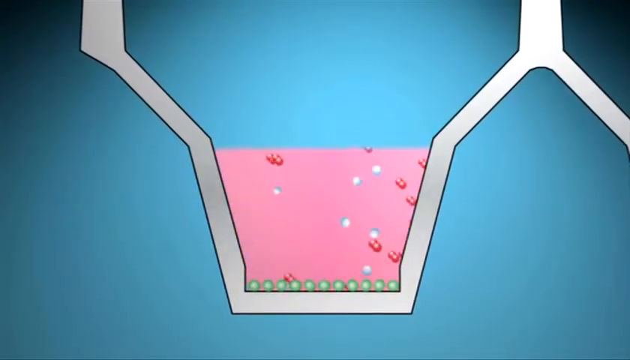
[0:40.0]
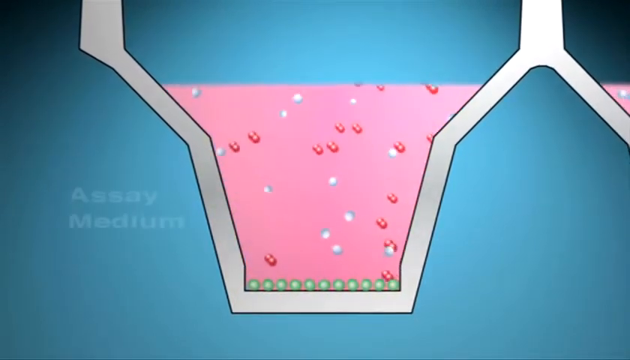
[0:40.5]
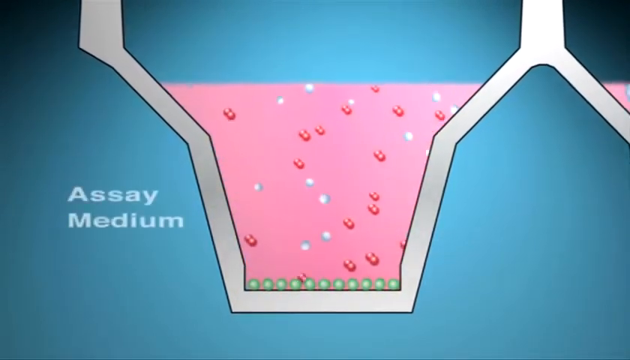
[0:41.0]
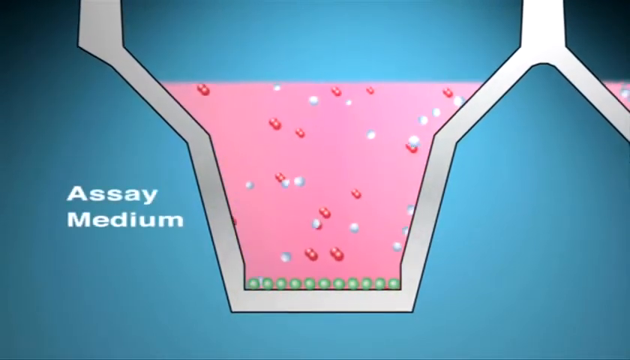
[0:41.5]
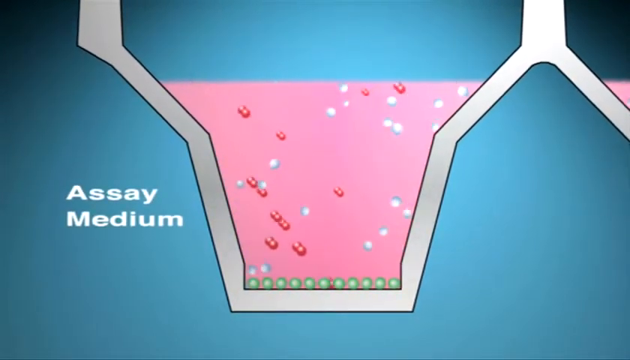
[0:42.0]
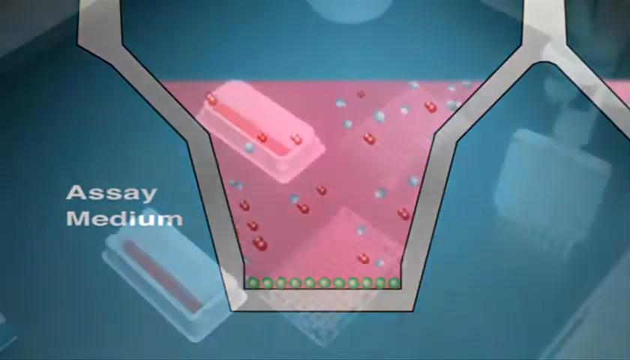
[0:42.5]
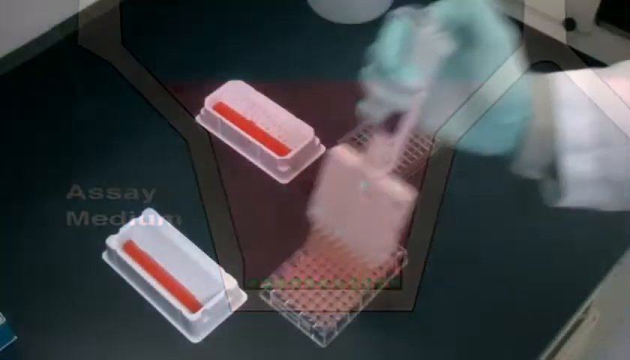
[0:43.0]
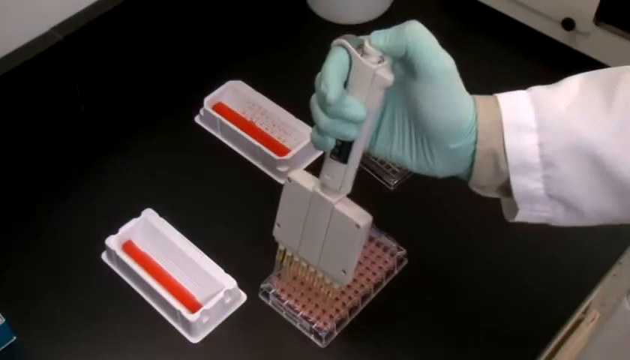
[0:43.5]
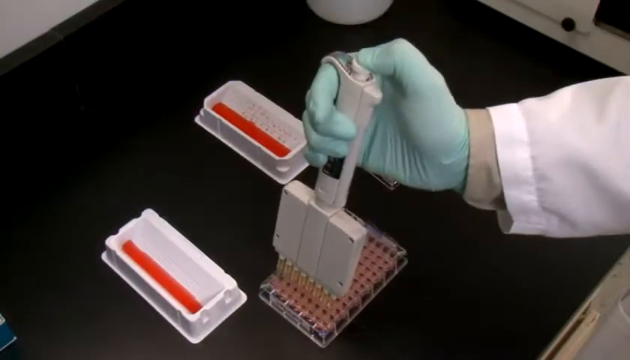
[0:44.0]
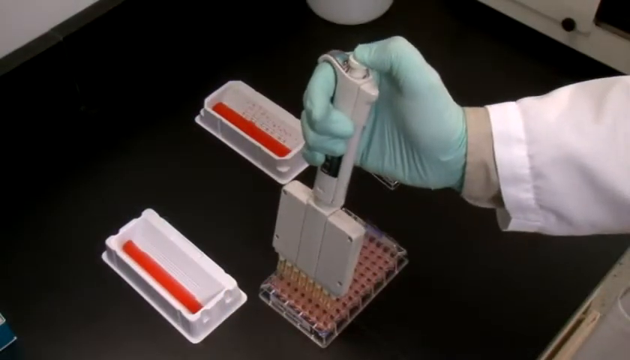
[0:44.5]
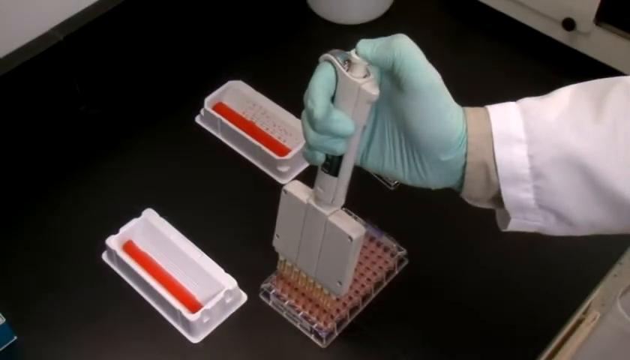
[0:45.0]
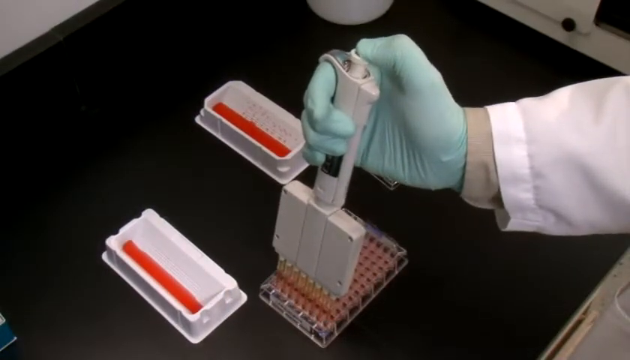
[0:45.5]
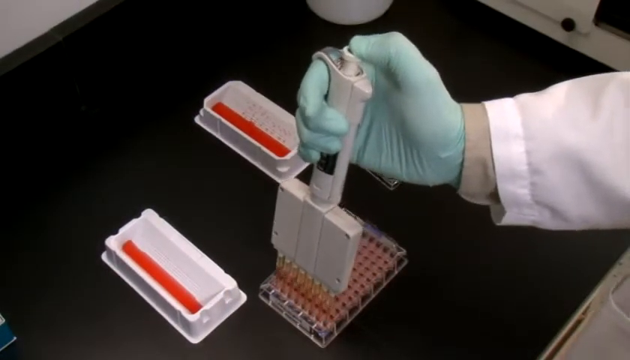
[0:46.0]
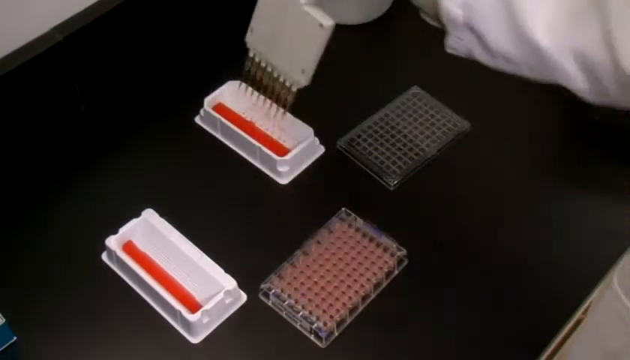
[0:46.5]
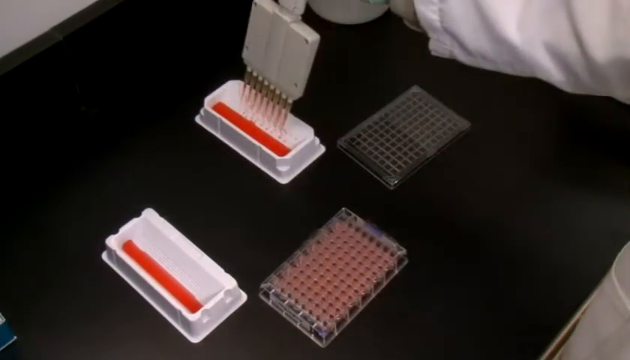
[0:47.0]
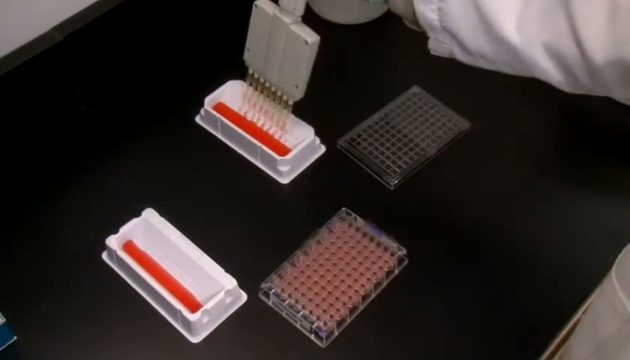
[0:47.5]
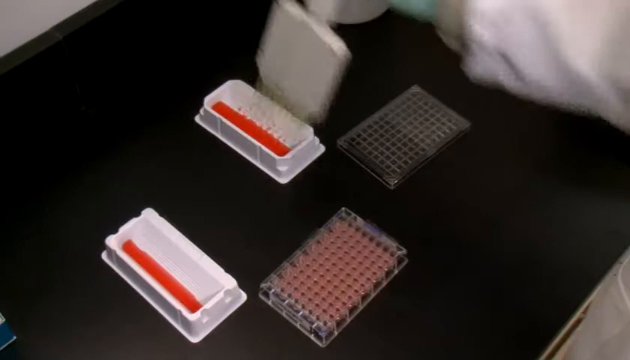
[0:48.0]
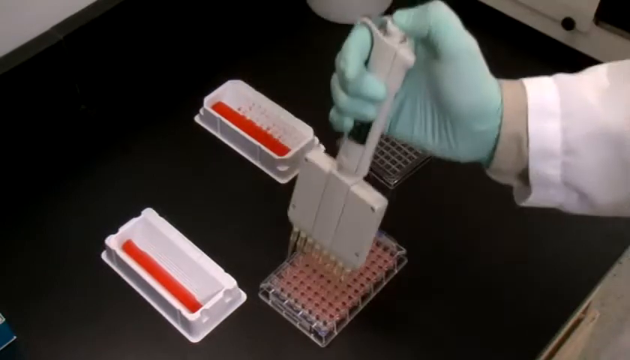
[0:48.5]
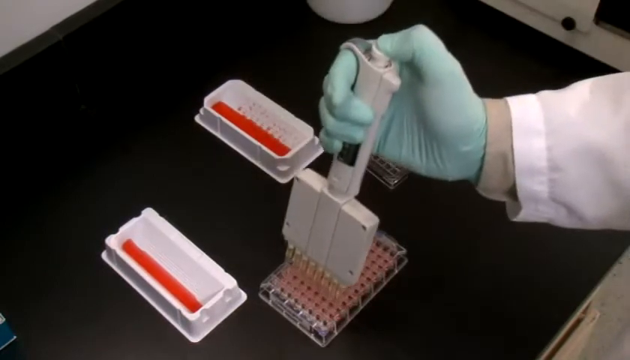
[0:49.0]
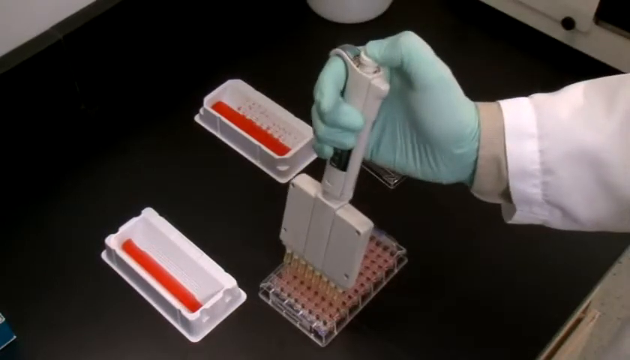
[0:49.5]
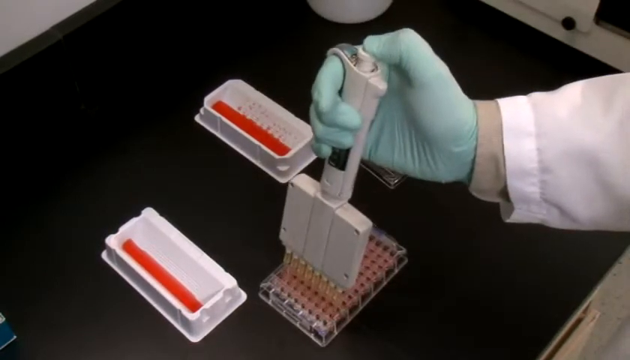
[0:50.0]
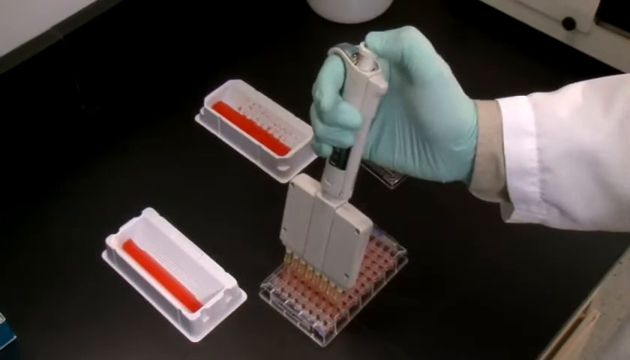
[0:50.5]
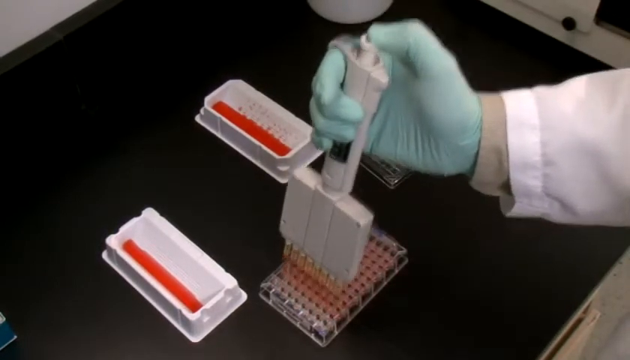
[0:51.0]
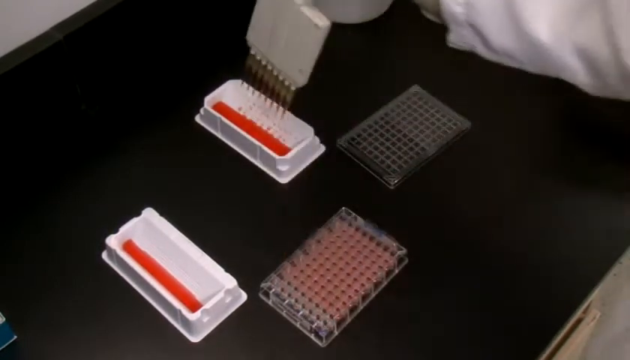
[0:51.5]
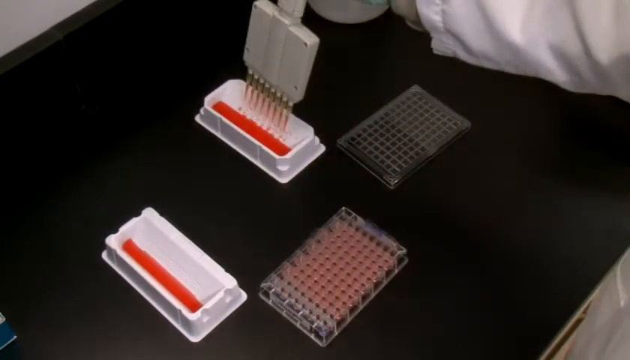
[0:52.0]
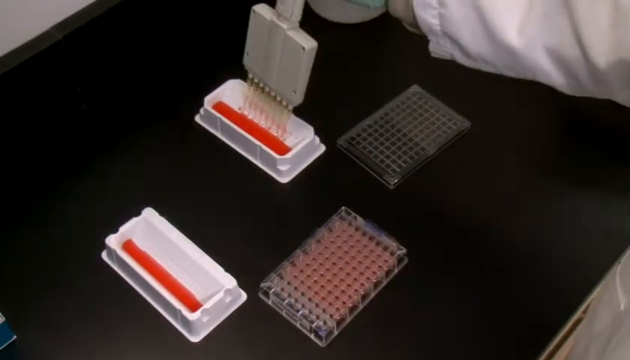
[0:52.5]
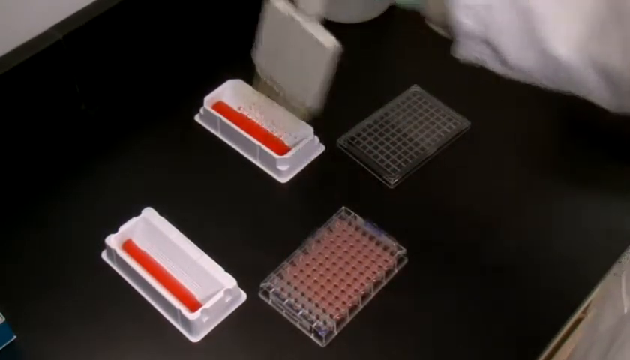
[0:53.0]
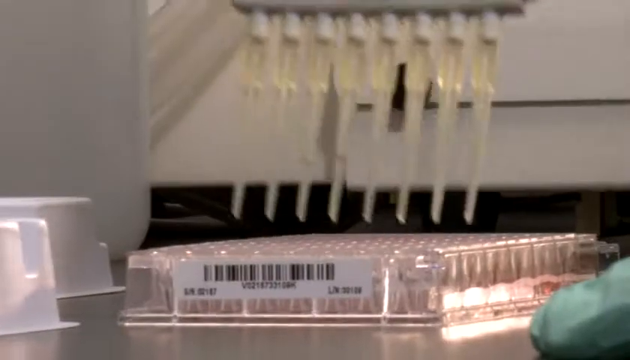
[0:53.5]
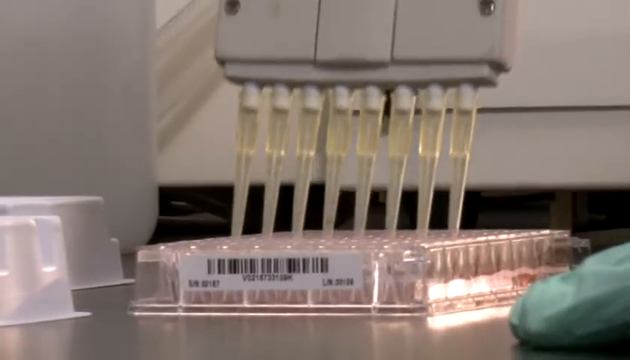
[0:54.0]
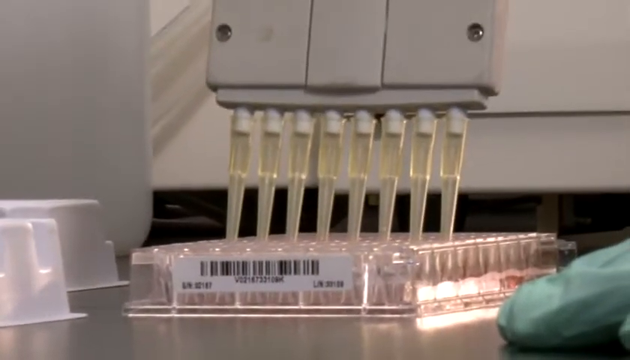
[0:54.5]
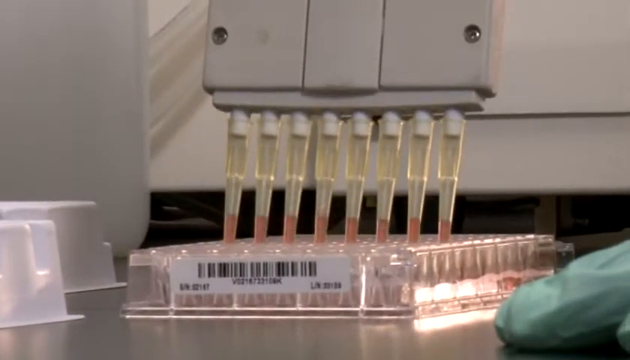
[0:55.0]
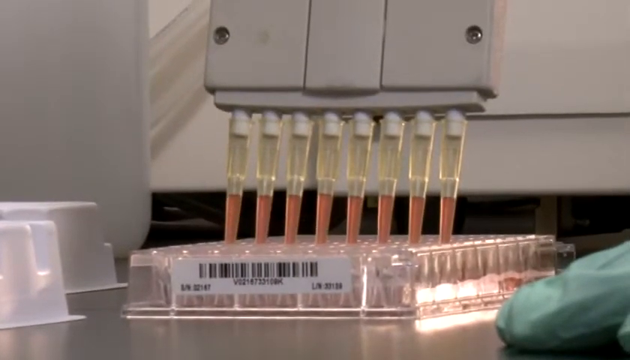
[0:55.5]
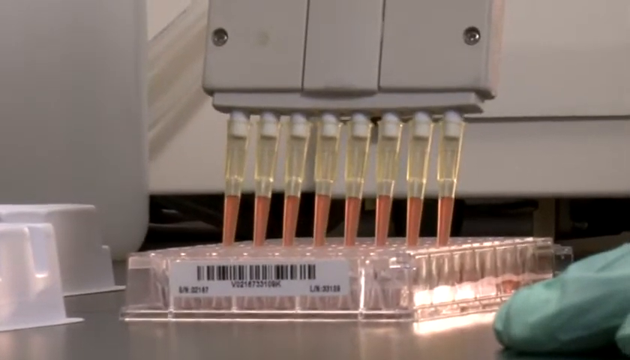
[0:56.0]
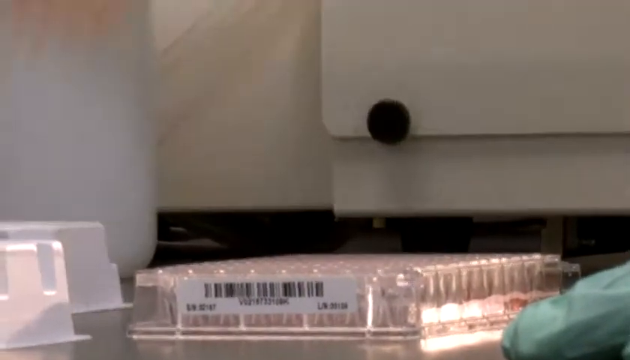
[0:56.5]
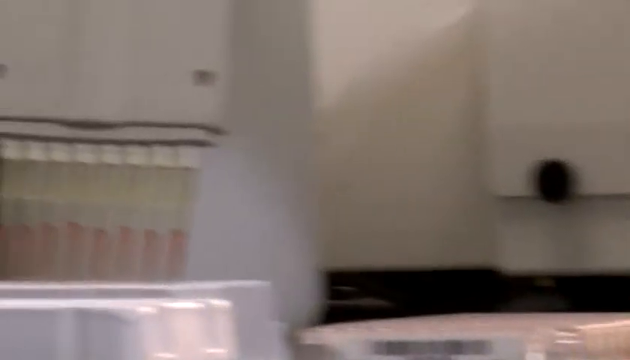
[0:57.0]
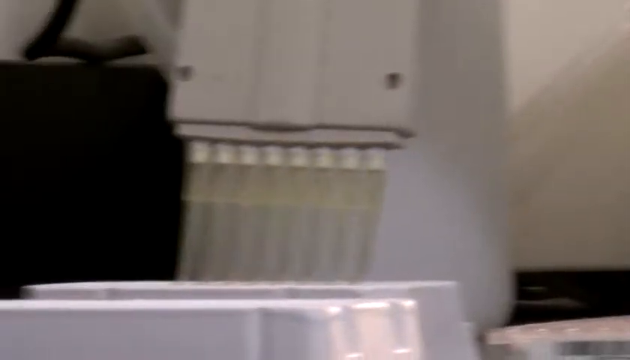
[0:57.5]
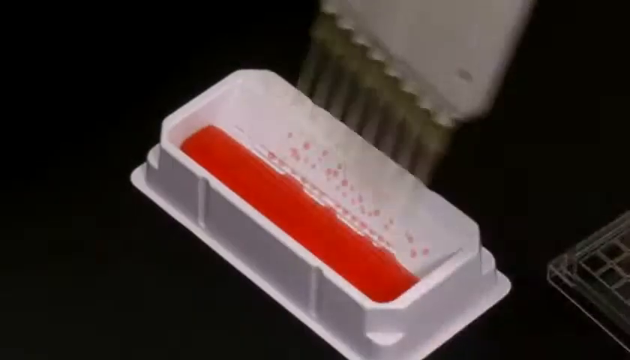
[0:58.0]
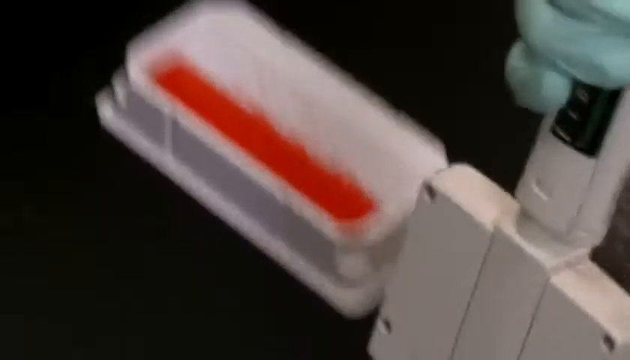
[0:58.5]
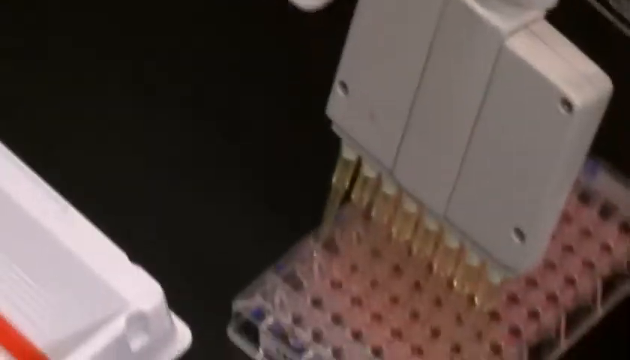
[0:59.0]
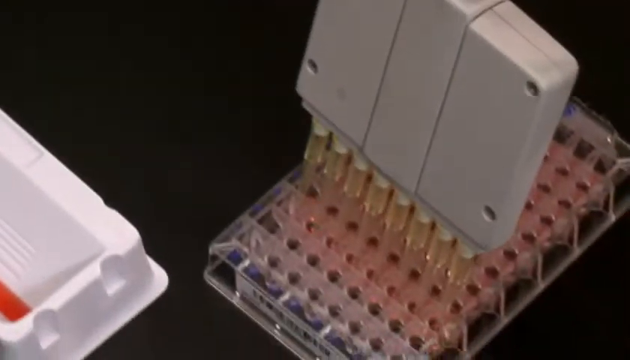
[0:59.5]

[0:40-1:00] An animated illustration shows the chemical process, with a text label on the left that says "assay medium". Pink liquid contains pink, red and blue ions. Next, a video shows a man inserting red liquid into tiny test tubes; only his hand is visible, and he wears a white lab coat and blue gloves. He transfers the liquids from one container to the next using multiple pipettes at the same time, arranged in rows of eight on the pipette holder. He uses the pipettes to suck up the pink liquid and transfer it into another container, repeating this several times until the first container is empty.